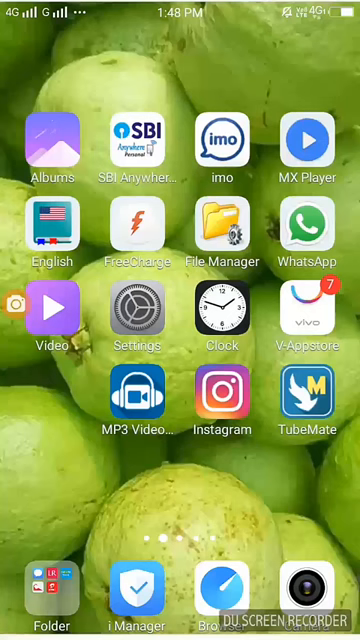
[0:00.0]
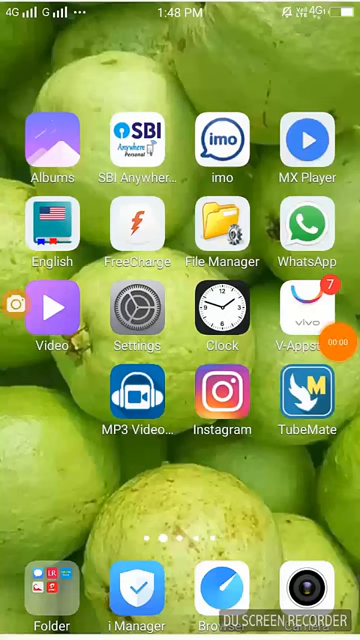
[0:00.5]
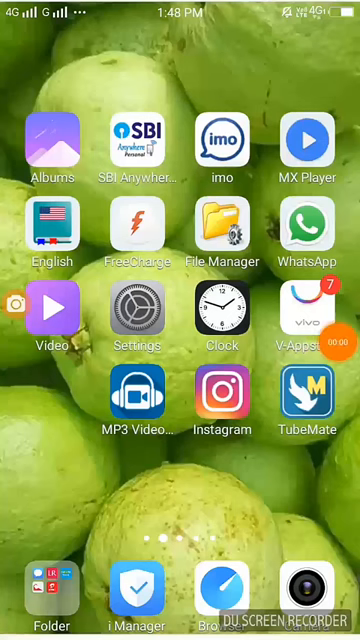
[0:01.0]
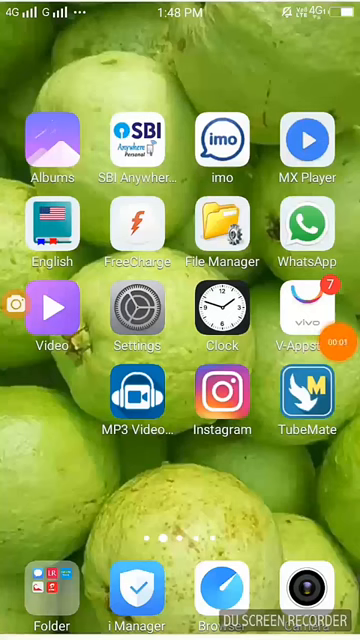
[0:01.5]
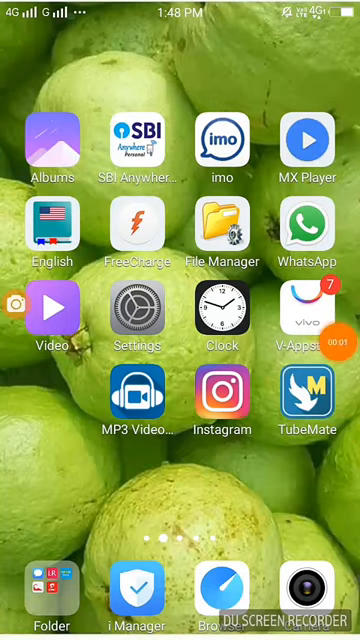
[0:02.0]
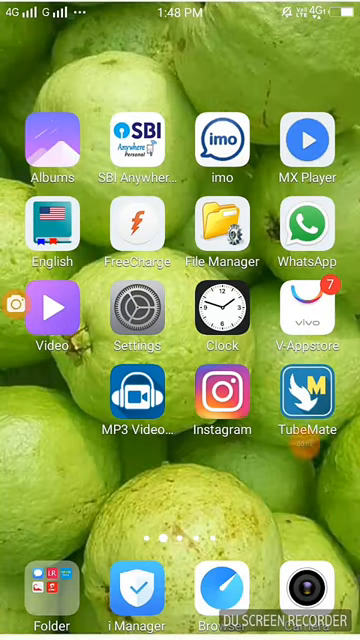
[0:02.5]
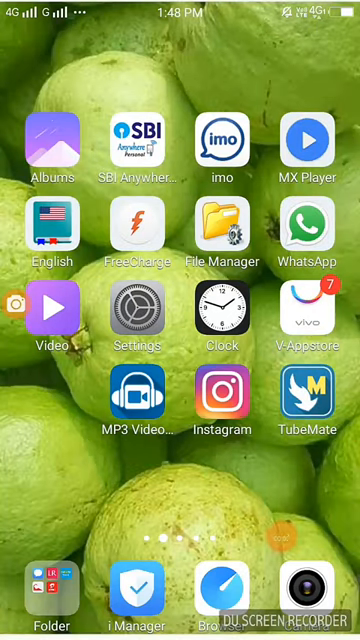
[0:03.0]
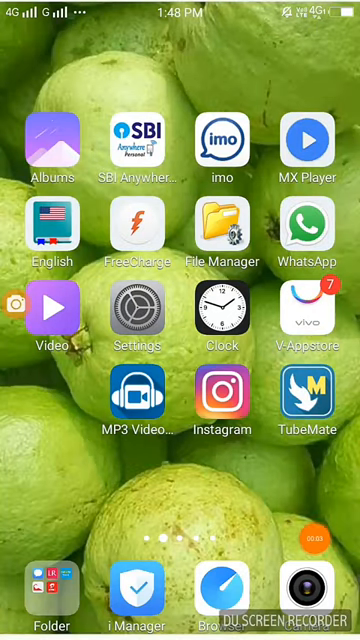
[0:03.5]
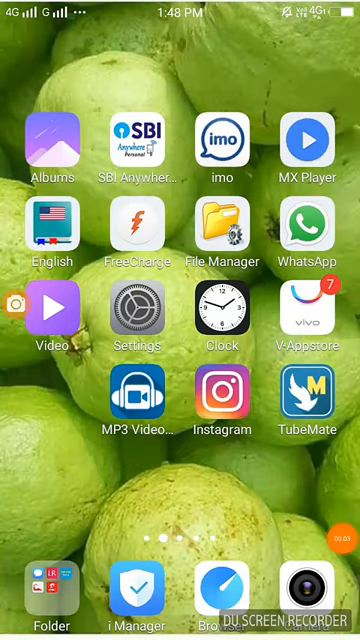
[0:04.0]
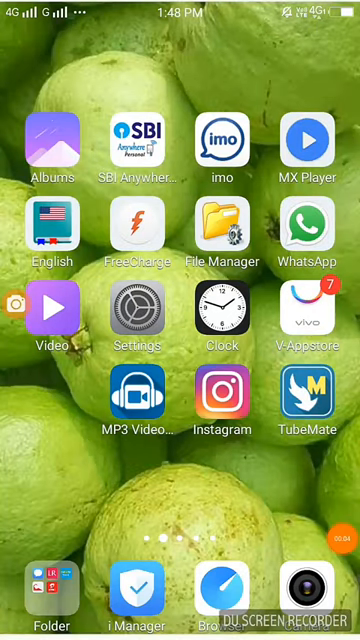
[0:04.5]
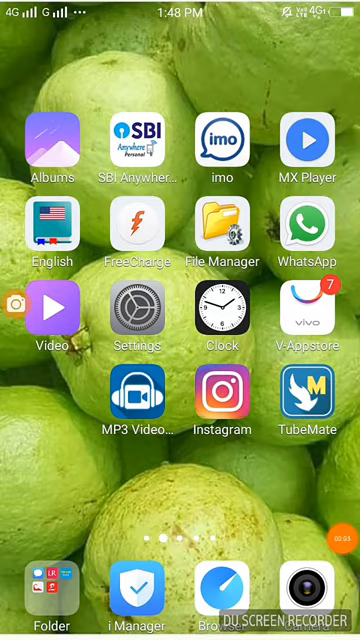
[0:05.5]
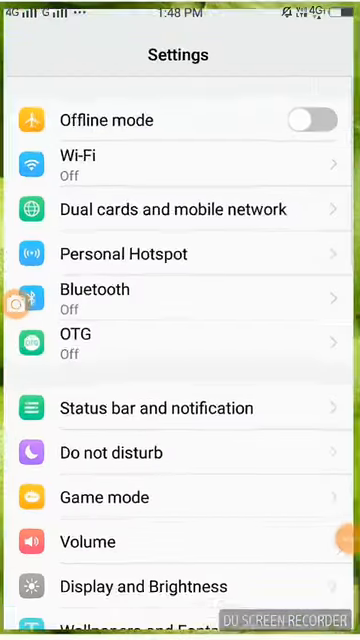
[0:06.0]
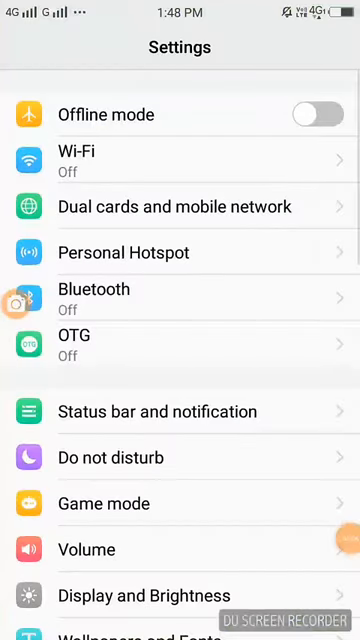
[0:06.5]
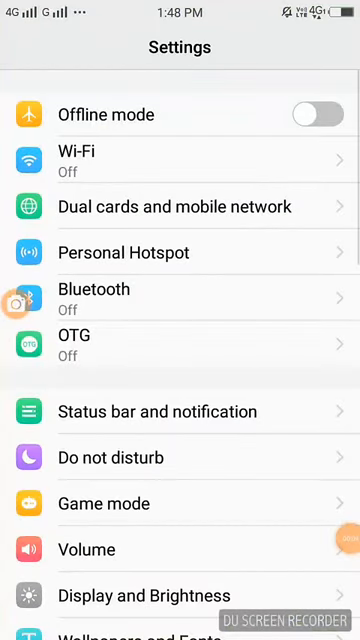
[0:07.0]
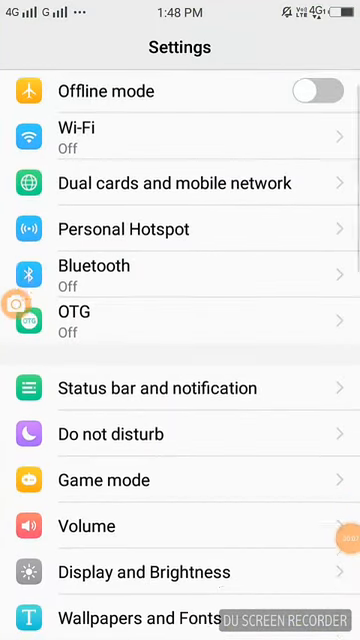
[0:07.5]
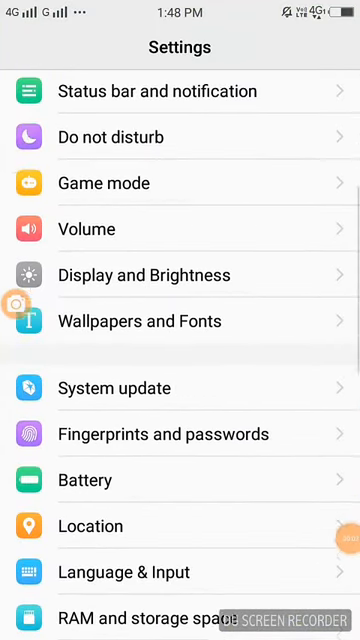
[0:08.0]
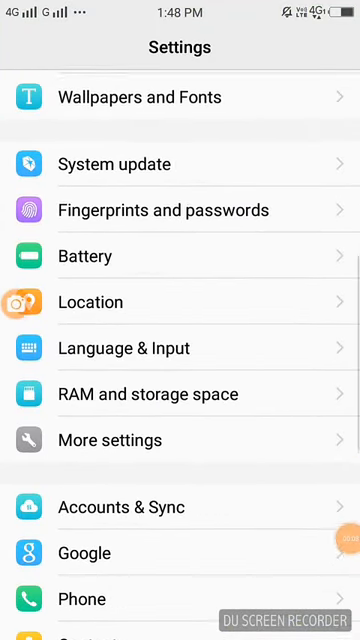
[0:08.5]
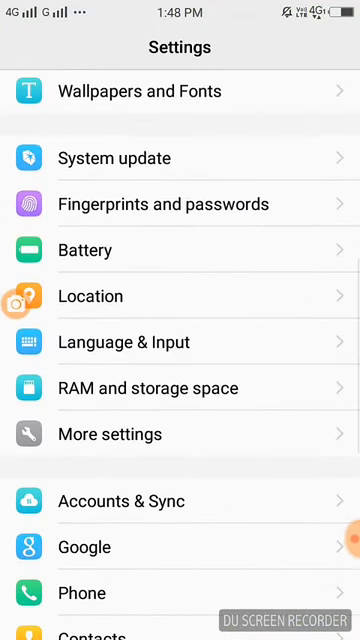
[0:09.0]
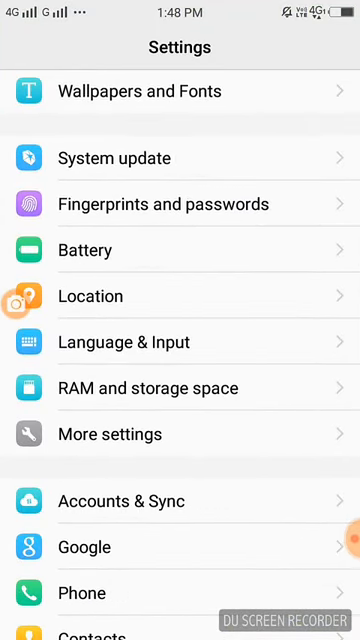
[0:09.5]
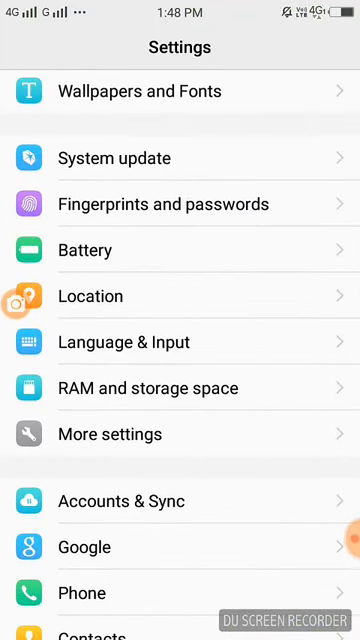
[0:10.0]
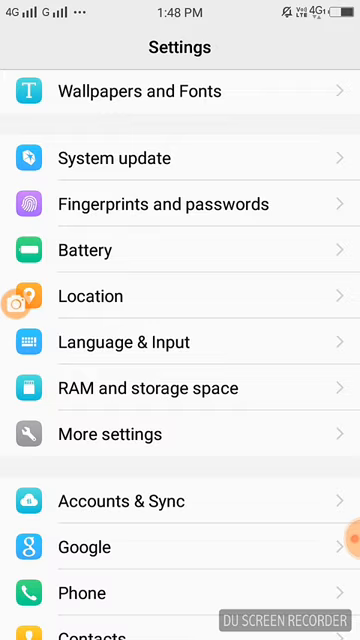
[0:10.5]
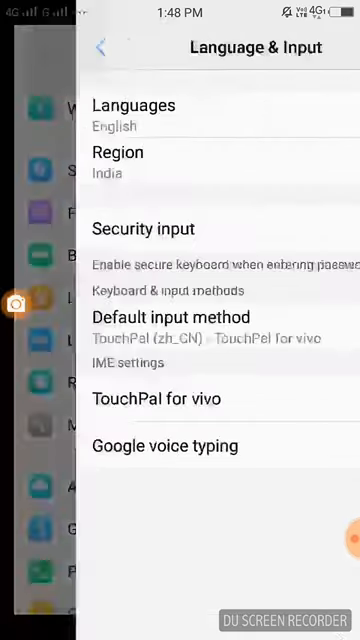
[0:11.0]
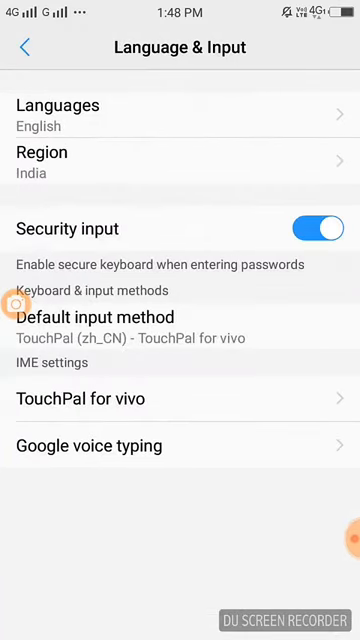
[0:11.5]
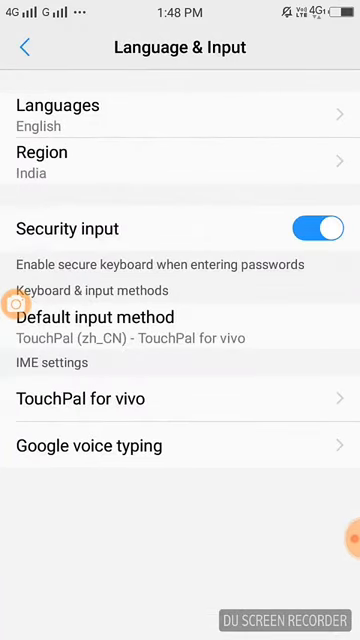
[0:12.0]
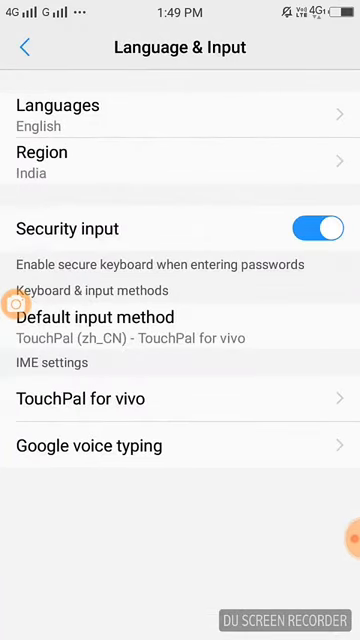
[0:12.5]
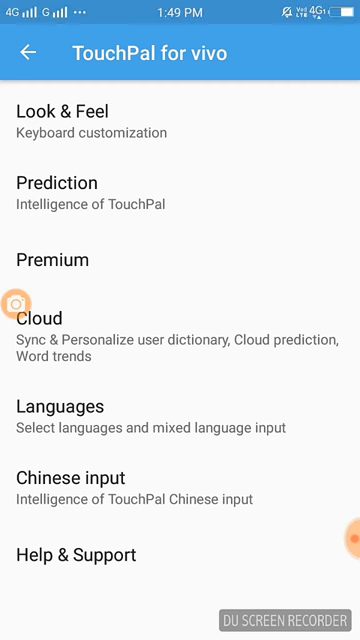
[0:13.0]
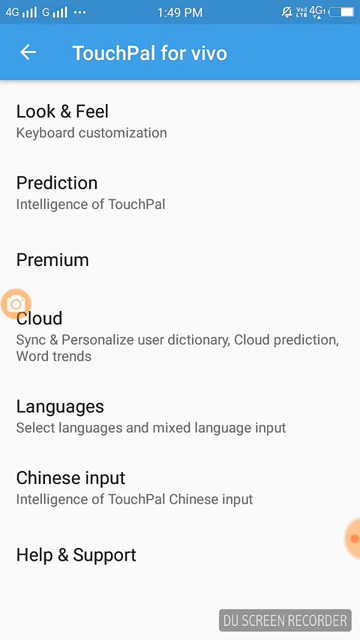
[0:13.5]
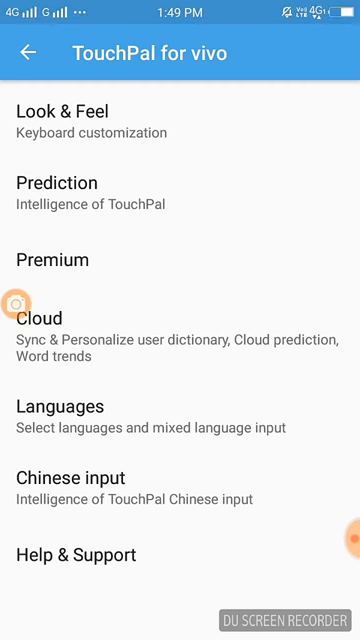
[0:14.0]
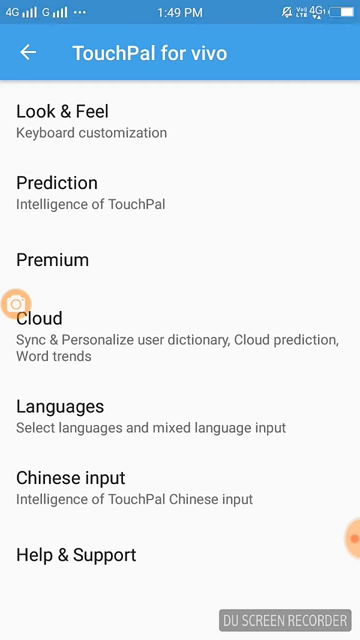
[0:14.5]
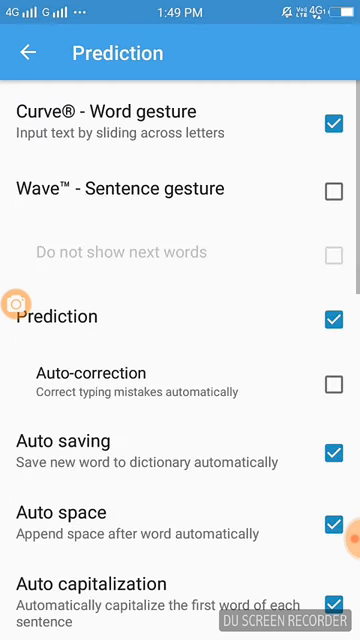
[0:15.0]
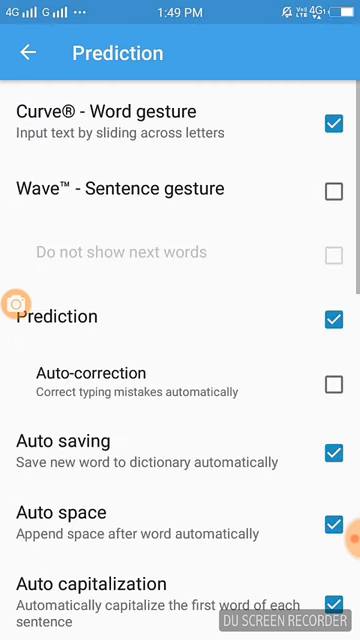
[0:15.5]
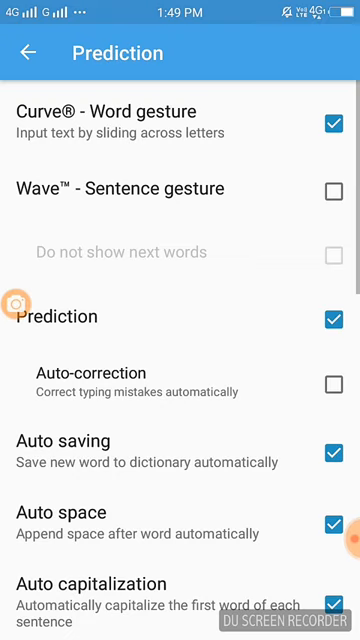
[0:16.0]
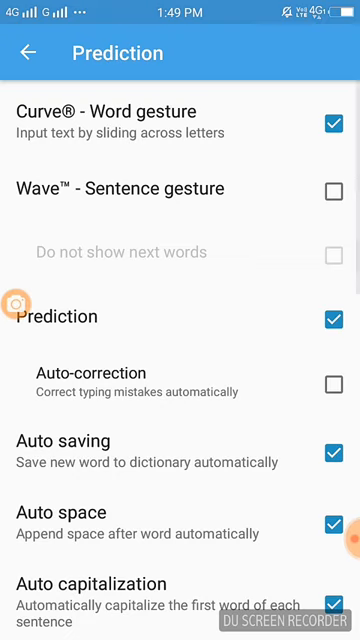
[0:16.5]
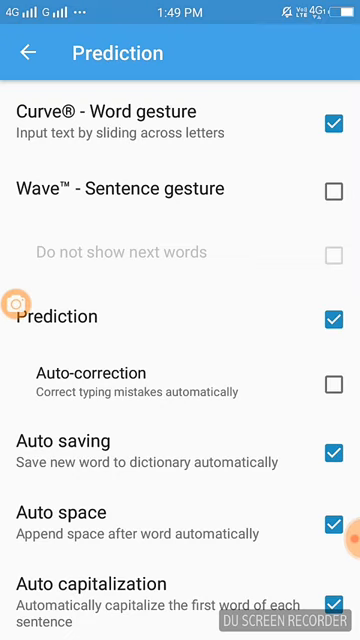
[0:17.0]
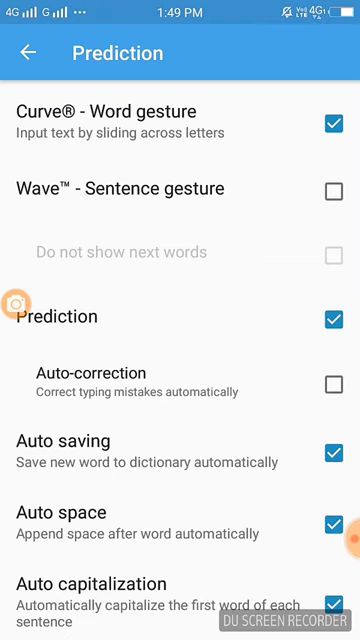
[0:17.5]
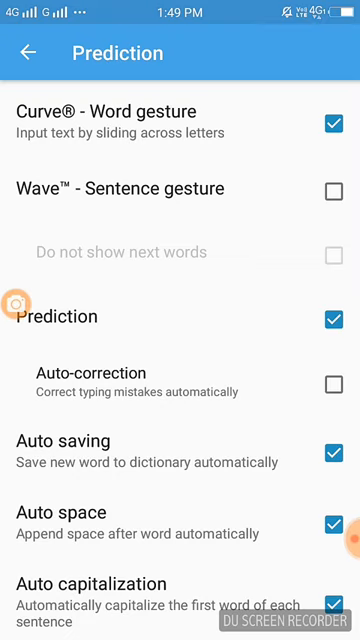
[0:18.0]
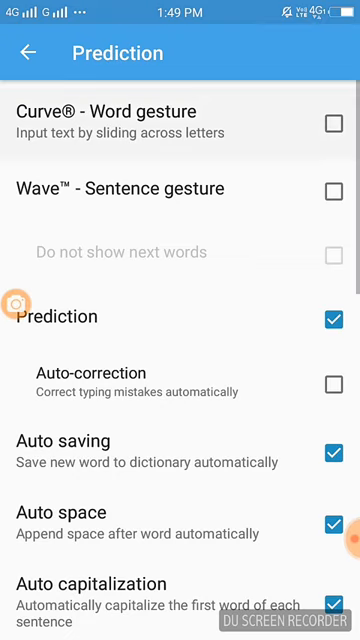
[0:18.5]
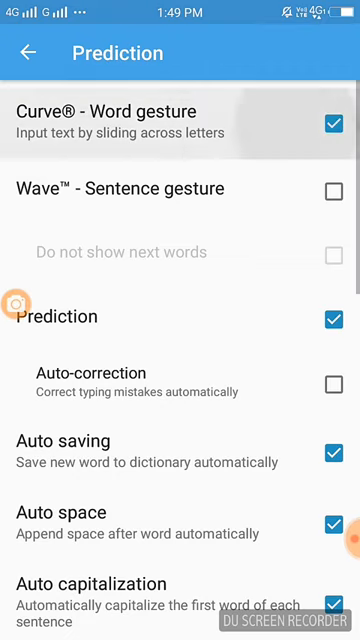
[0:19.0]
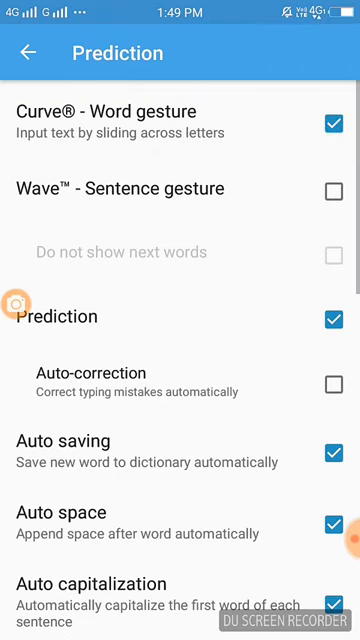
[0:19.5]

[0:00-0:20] The video starts on a phone's landing page with a wallpaper that looks like it is made up of guava fruit. The landing page has many apps, including WhatsApp, a clock, Instagram, a video app and settings. A screen recorder is also on screen. The person first moves the screen recorder timer to the bottom, then clicks on settings, then on language and input, and then on TouchPal for Vivo. The TouchPal for Vivo screen has checkboxes; they click prediction, which has more checkboxes. They uncheck curve word gesture, check it again, and then scroll down a little.